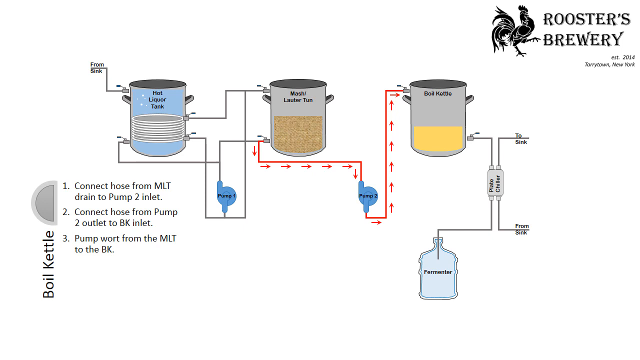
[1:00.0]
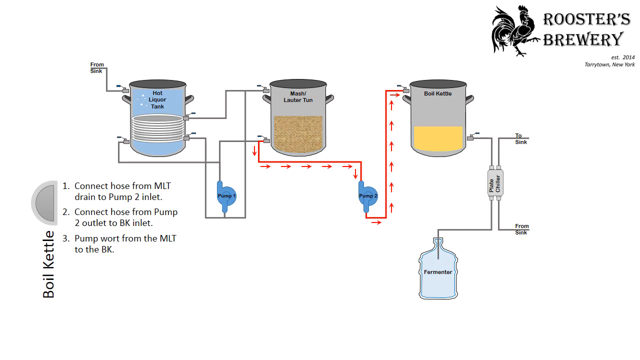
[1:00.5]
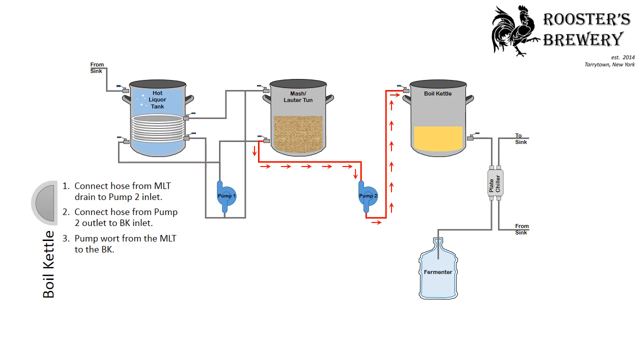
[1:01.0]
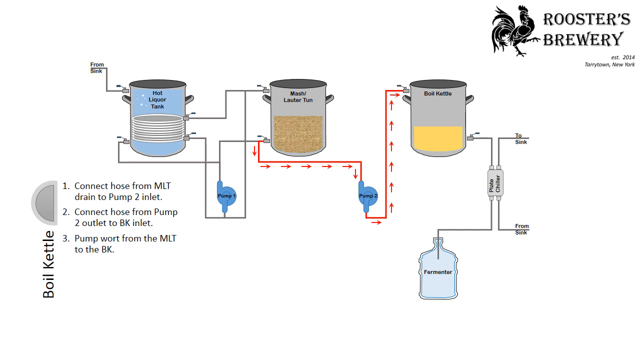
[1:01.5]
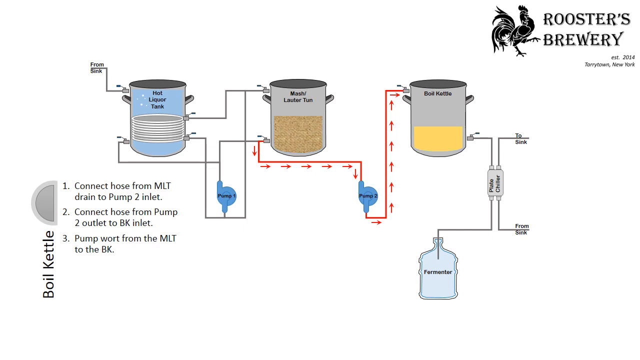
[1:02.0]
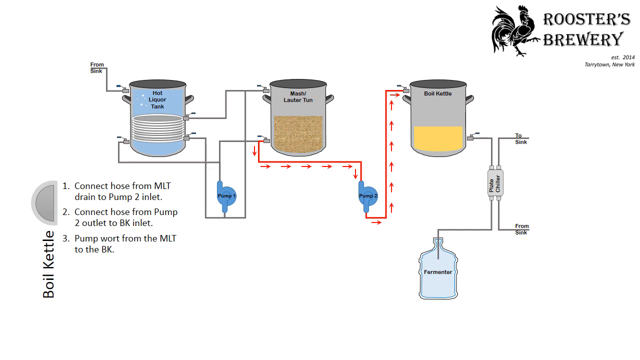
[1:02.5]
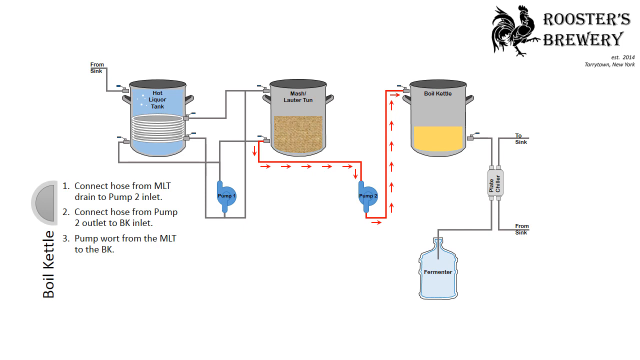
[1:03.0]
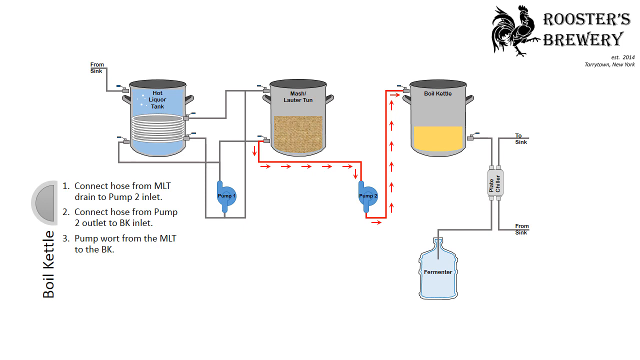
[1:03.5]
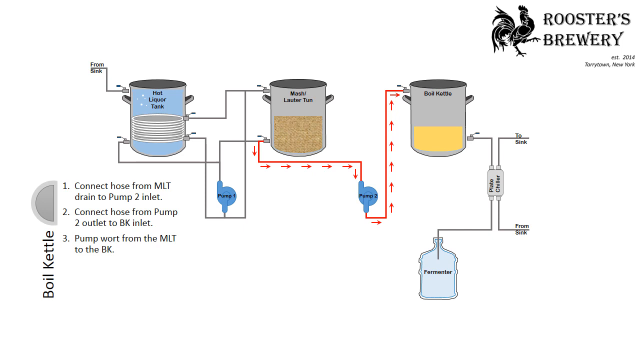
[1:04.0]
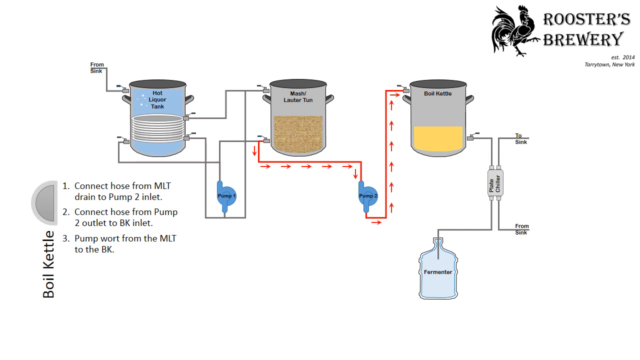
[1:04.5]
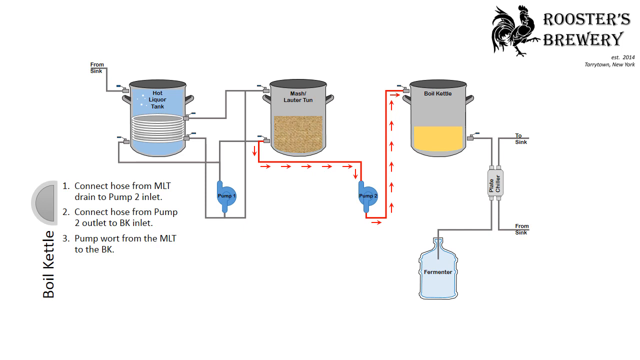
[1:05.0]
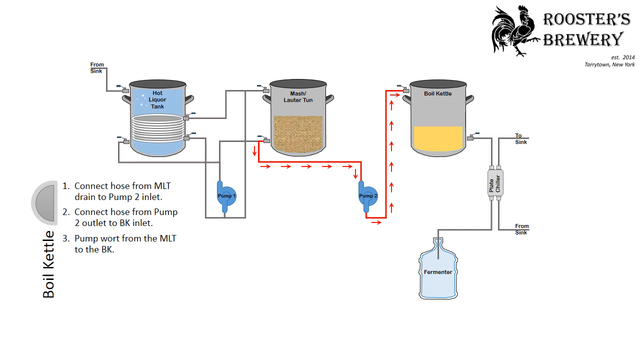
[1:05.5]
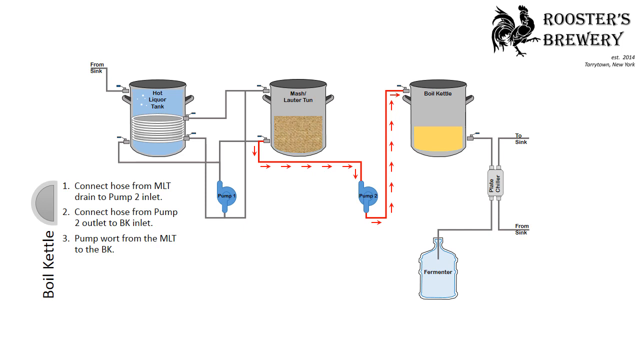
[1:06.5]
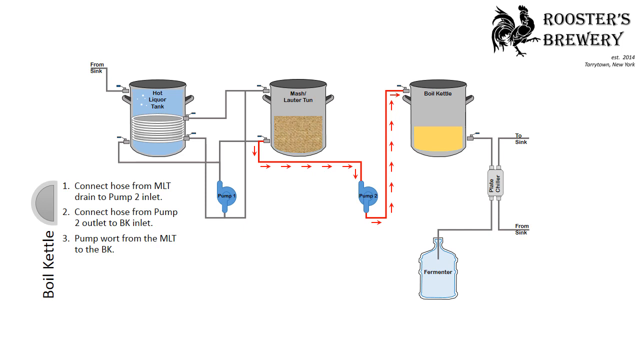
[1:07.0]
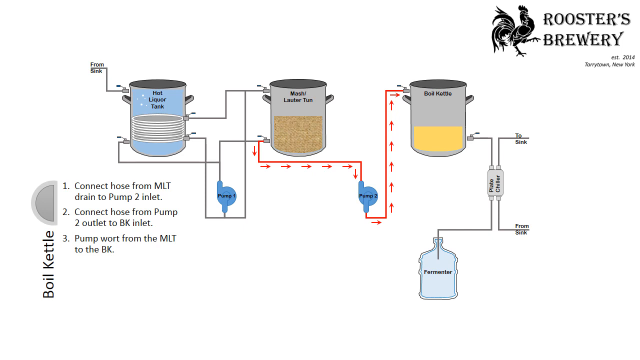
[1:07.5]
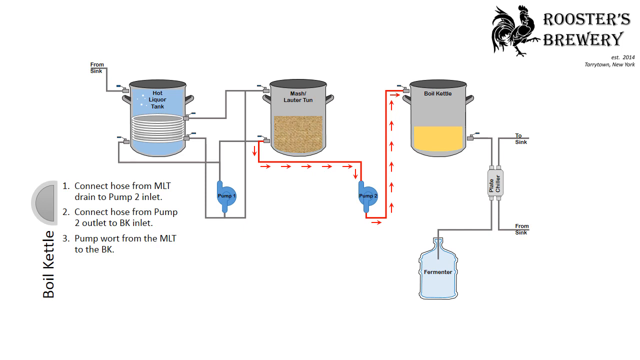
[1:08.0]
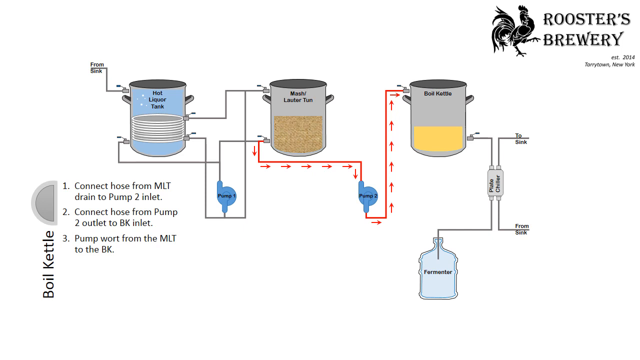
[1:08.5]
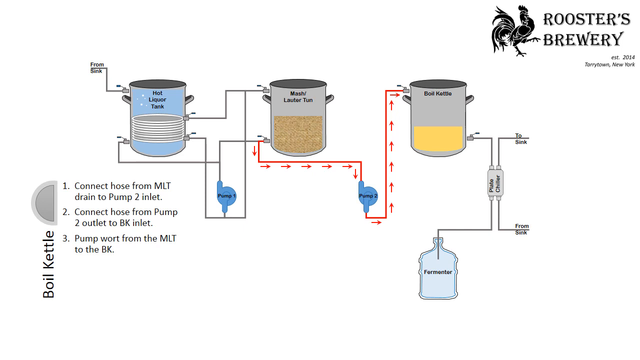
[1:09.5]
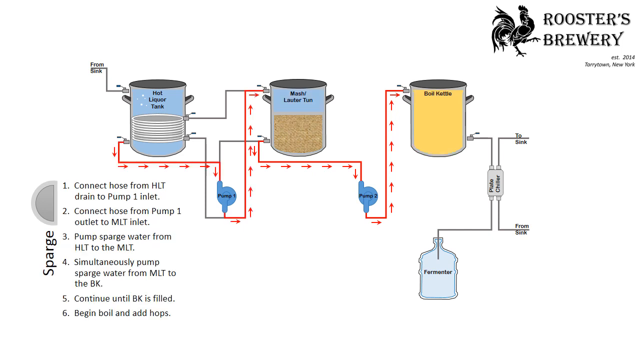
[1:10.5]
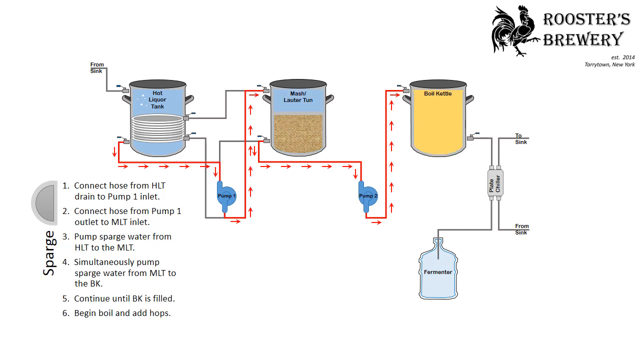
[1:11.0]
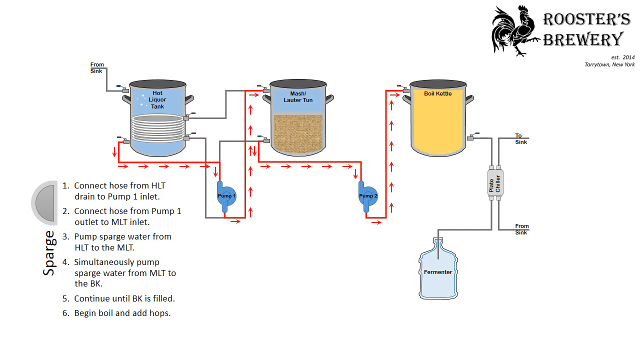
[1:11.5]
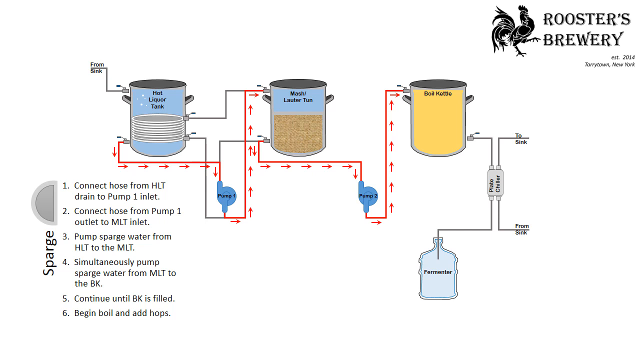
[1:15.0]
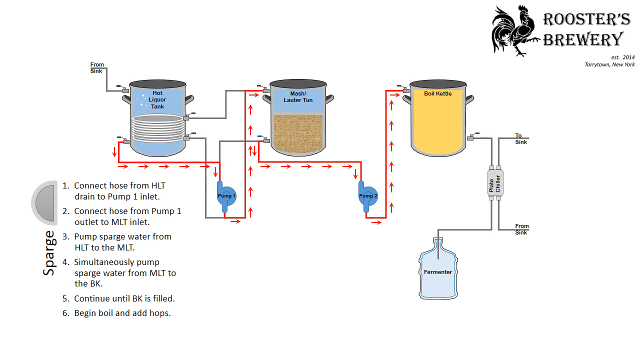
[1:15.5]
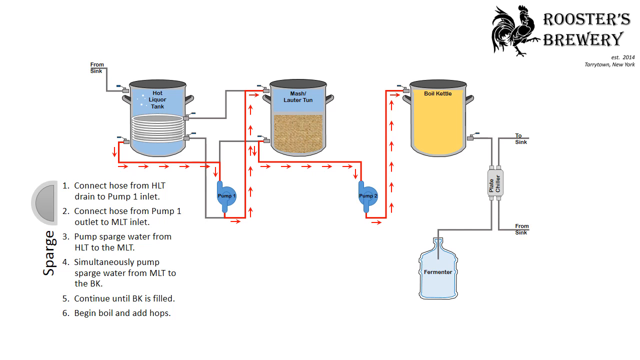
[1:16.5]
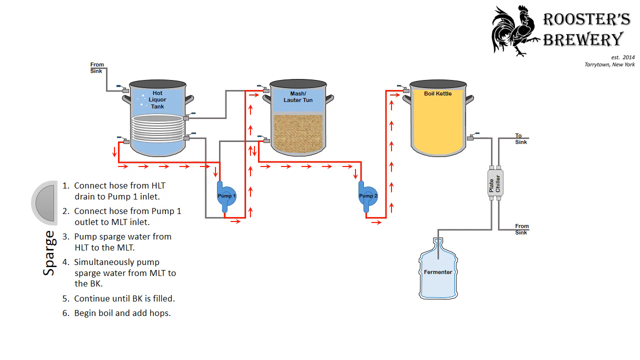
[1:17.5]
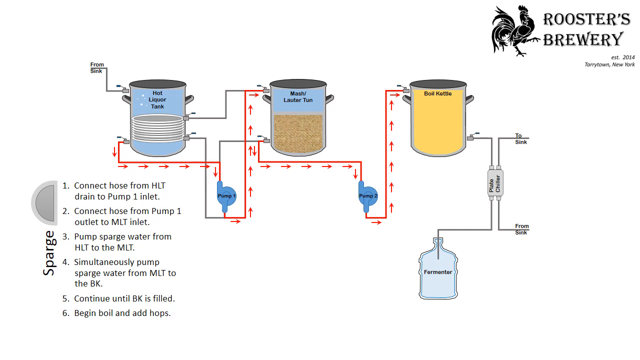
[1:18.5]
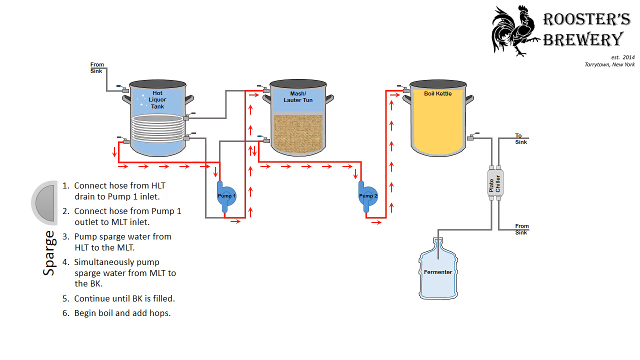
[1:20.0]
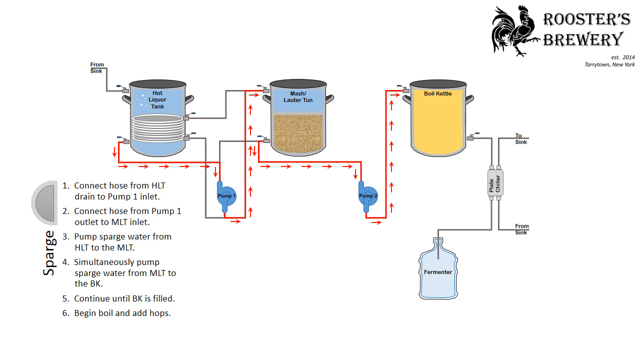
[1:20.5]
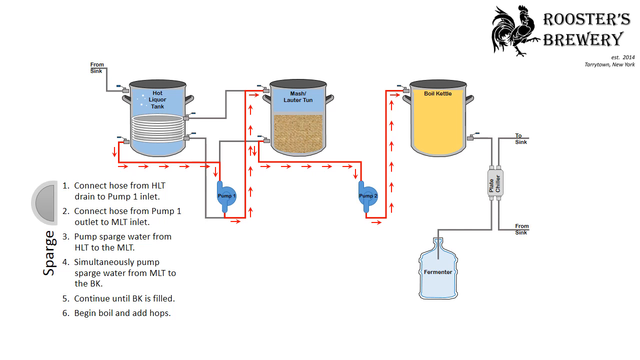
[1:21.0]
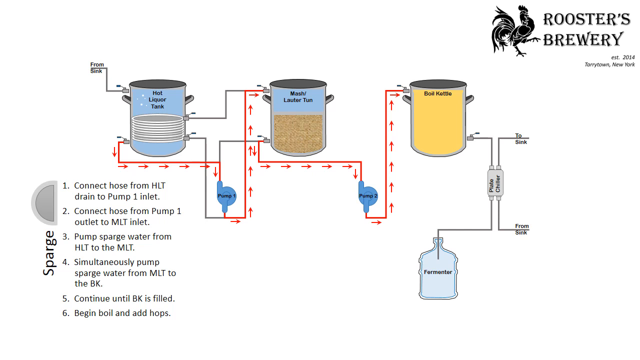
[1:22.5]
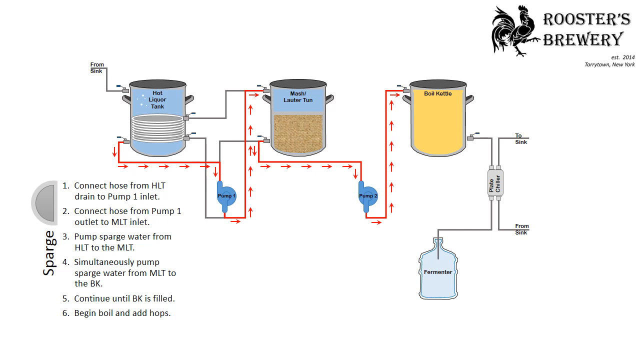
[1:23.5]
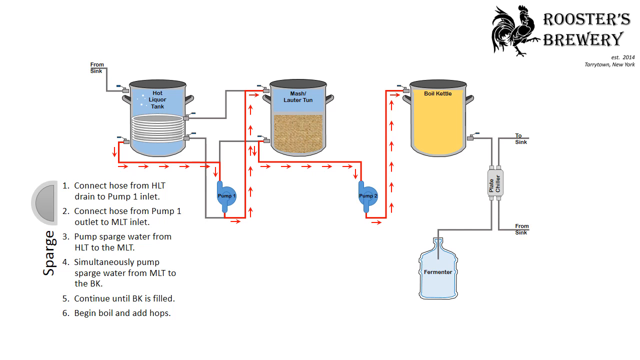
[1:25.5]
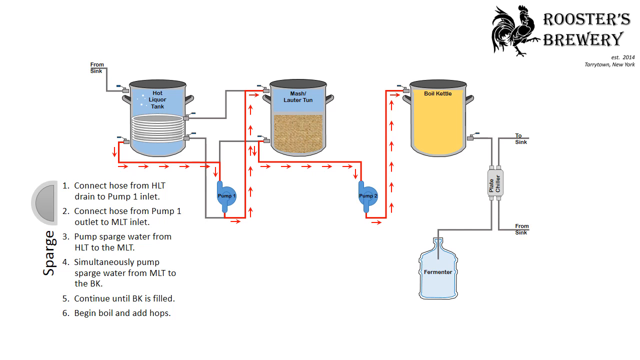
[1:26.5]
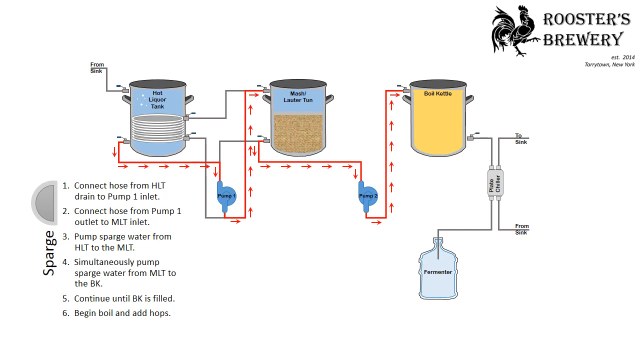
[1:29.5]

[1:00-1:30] The boil kettle receives the output from the MLT. The sparge phase follows. Its first step is to connect the hose from the HLT, the first pot, to the pump 1 inlet, then connect the hose from the pump 1 outlet to the MLT inlet, the second pot. Sparge water is pumped from the HLT to the MLT while, simultaneously, sparge water is pumped from the MLT to the BK. The level in the boil kettle is now a lot higher. The next step is to continue until the boil kettle is filled and begin boiling the hops. On the left side of the steps is the name of the current phase, "Sparge", and on the right above it is an unidentified icon that is always there. Drawings visualize each step.